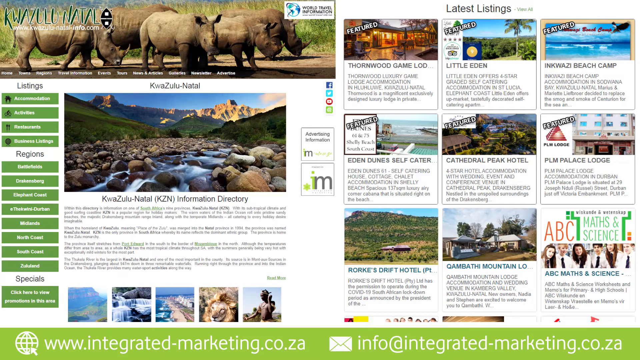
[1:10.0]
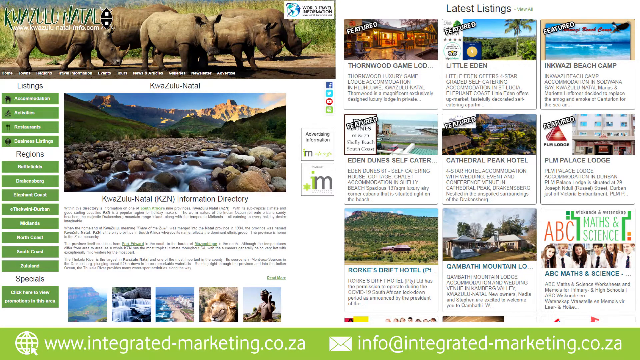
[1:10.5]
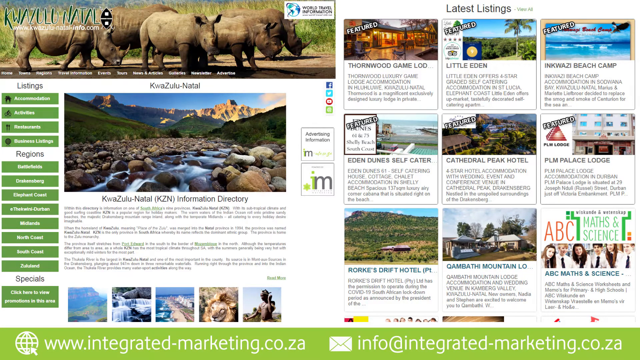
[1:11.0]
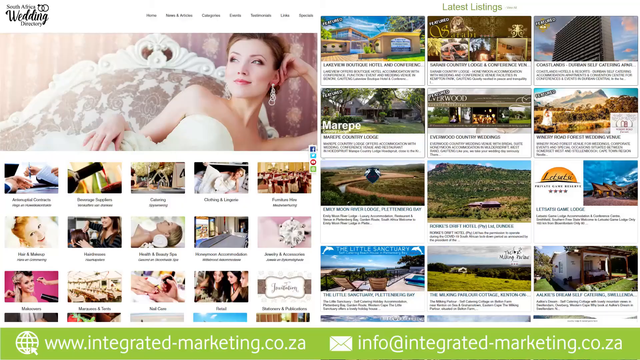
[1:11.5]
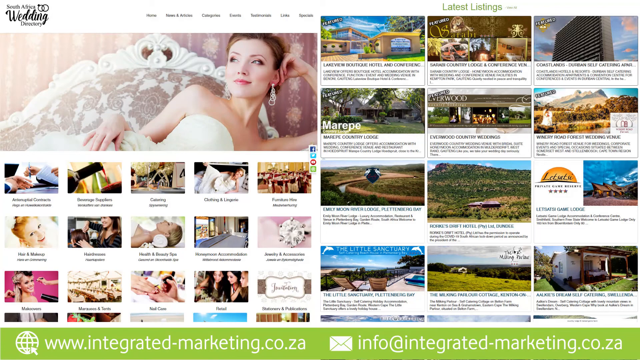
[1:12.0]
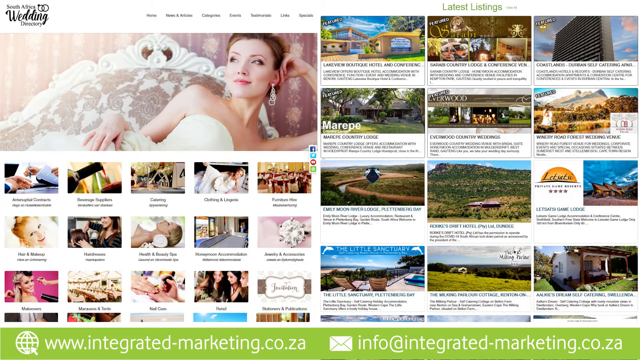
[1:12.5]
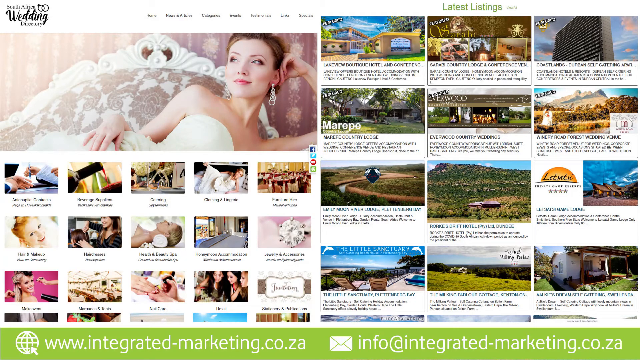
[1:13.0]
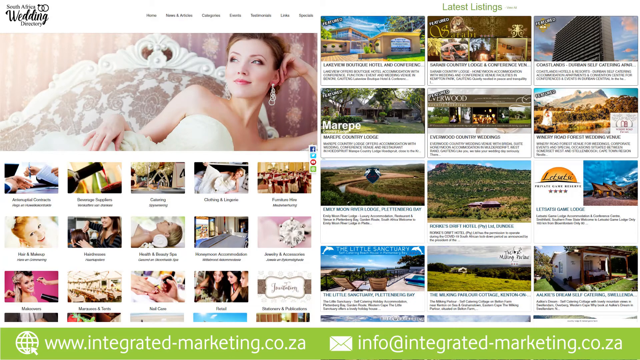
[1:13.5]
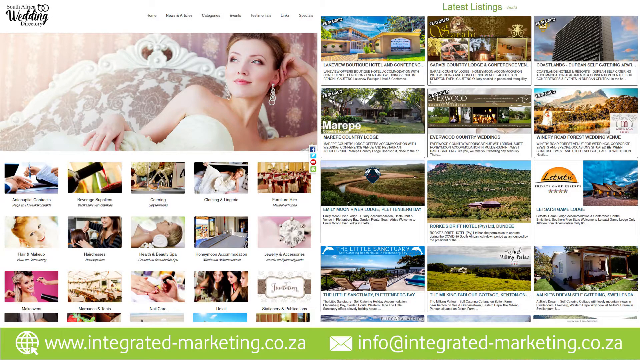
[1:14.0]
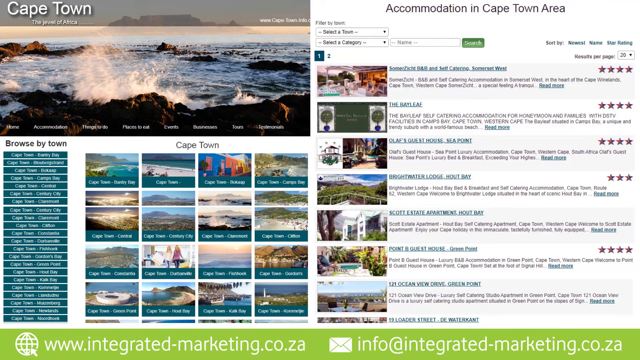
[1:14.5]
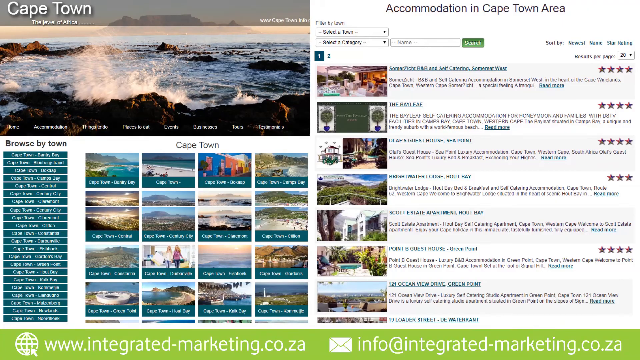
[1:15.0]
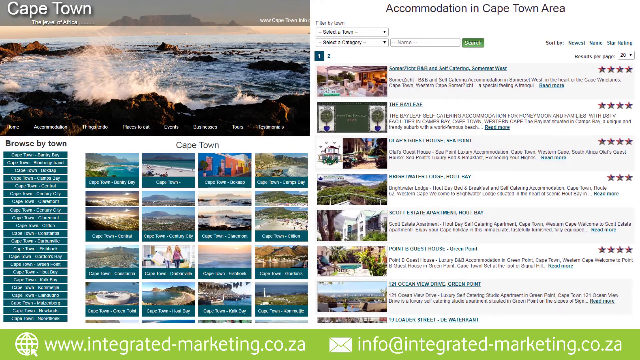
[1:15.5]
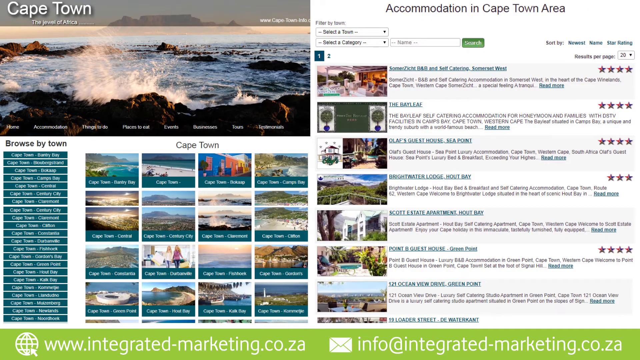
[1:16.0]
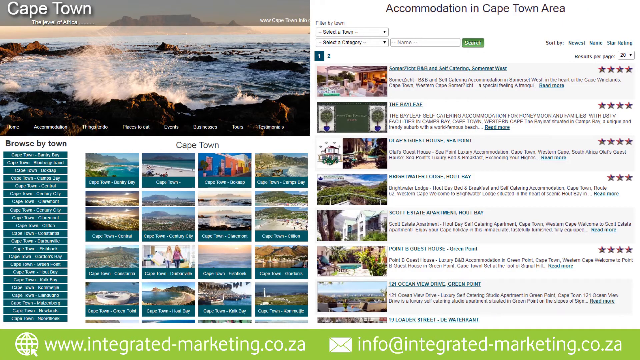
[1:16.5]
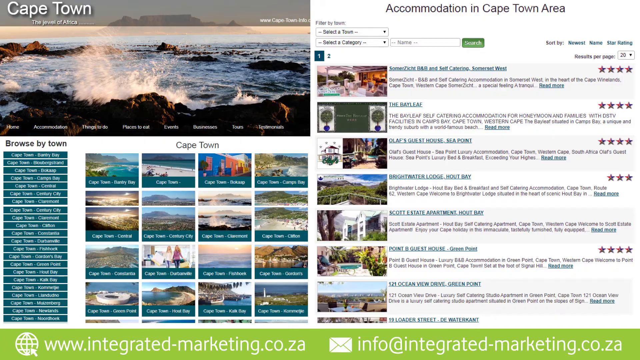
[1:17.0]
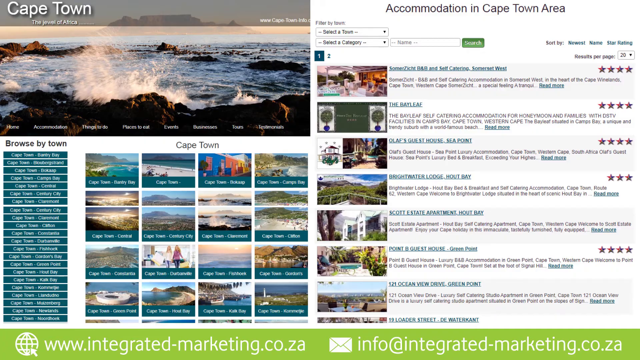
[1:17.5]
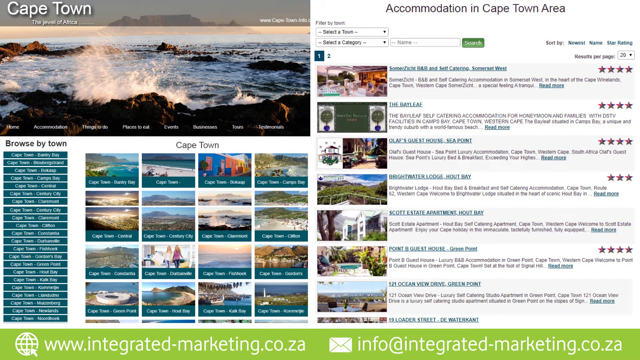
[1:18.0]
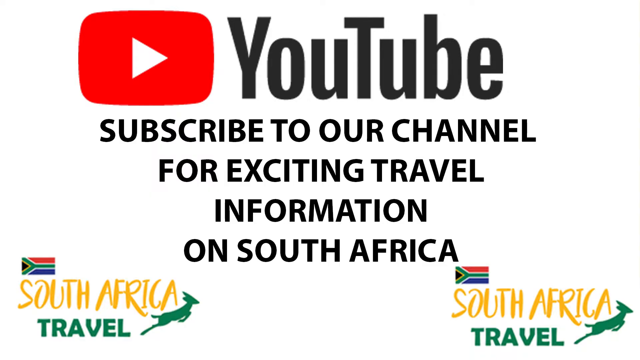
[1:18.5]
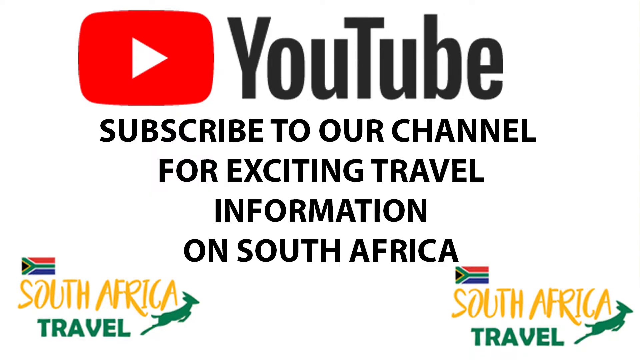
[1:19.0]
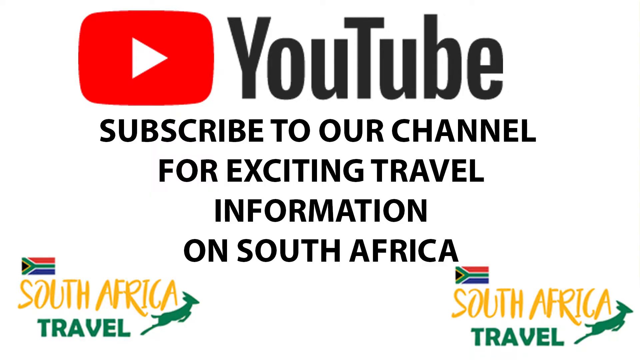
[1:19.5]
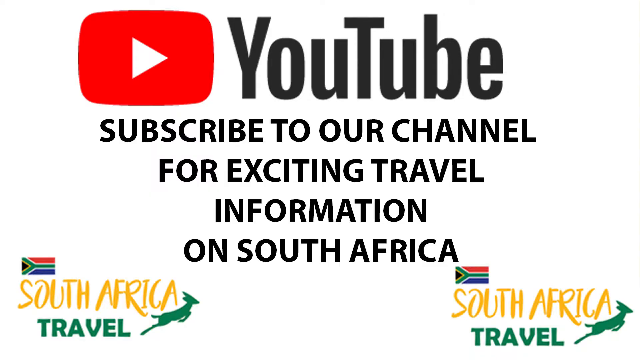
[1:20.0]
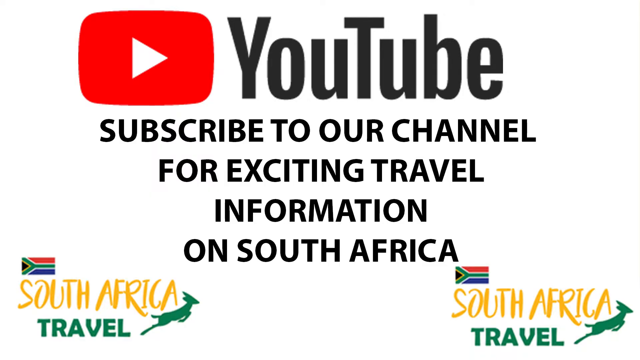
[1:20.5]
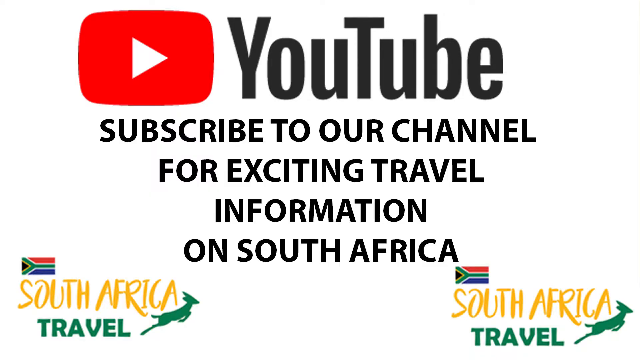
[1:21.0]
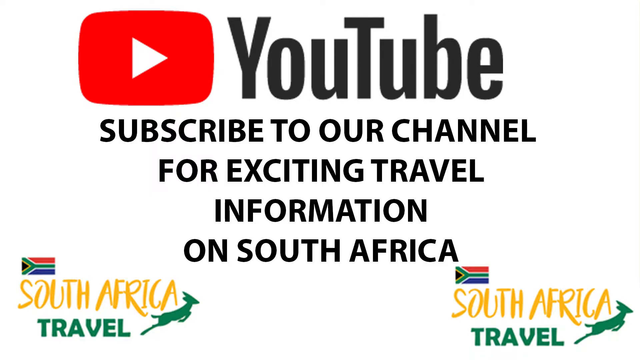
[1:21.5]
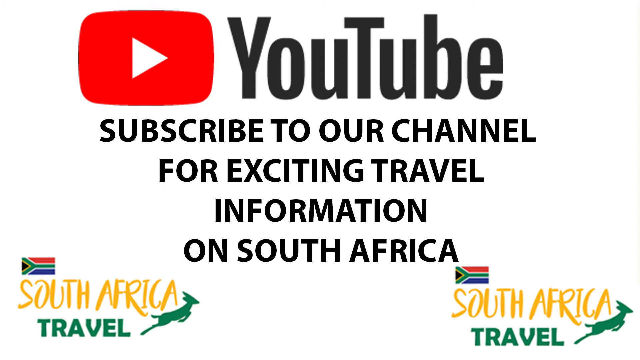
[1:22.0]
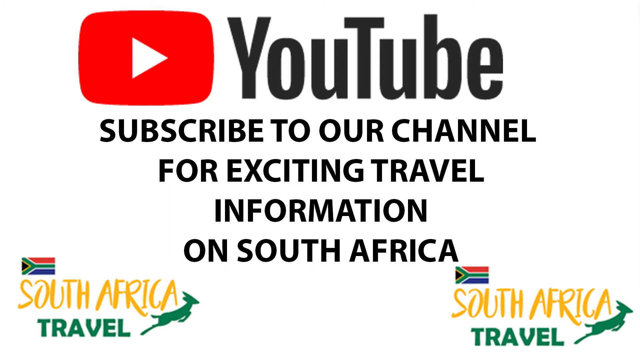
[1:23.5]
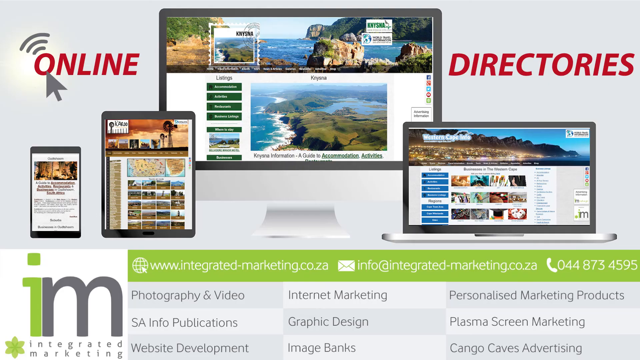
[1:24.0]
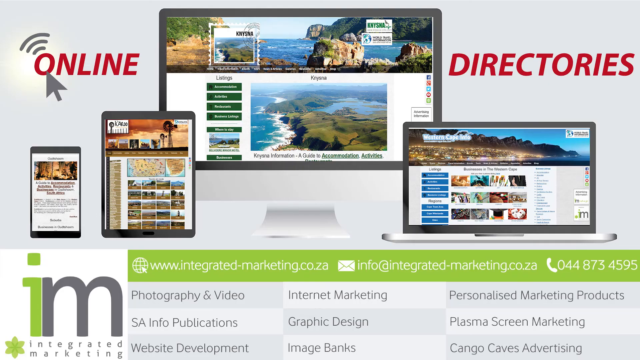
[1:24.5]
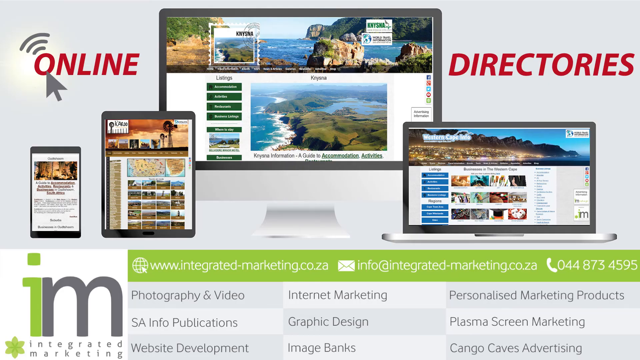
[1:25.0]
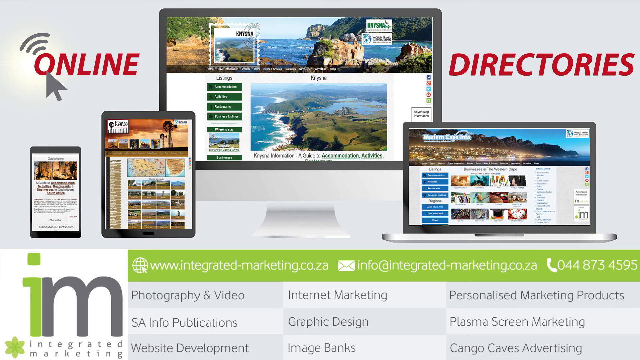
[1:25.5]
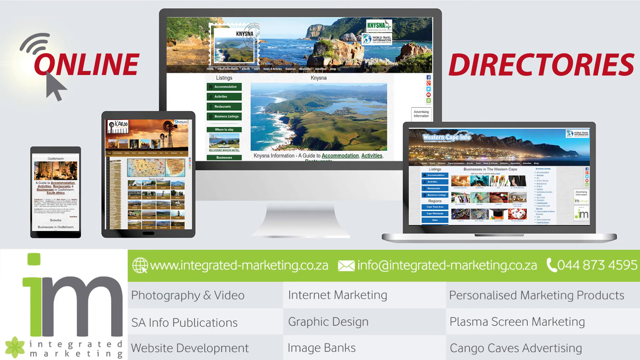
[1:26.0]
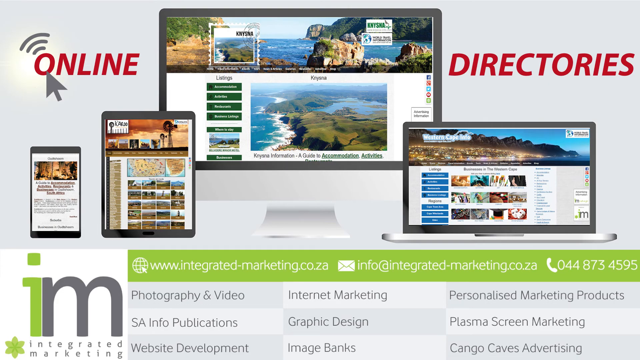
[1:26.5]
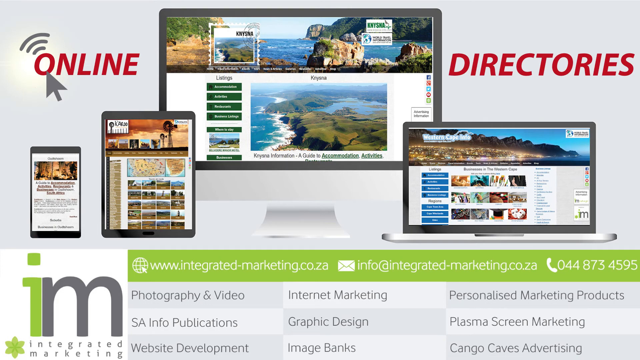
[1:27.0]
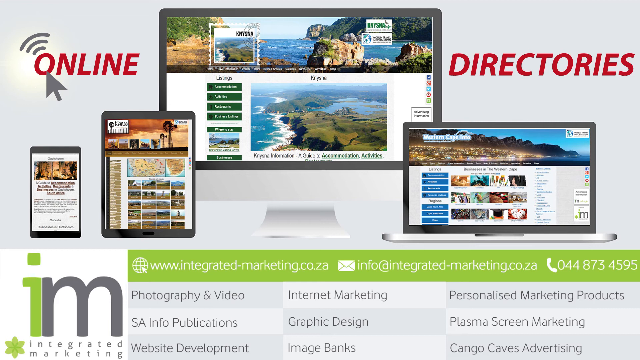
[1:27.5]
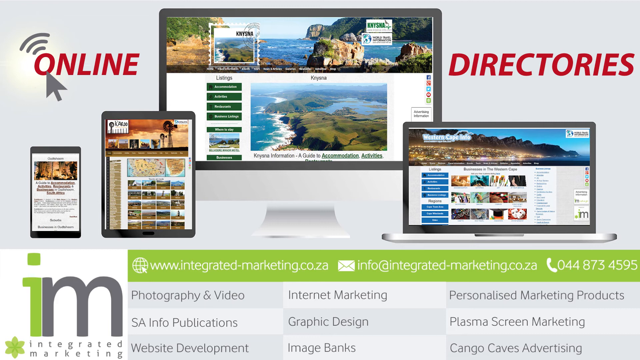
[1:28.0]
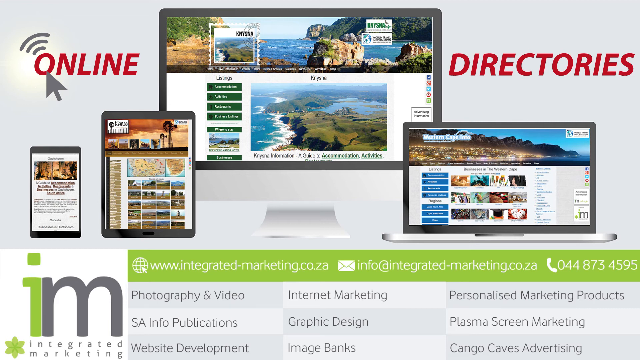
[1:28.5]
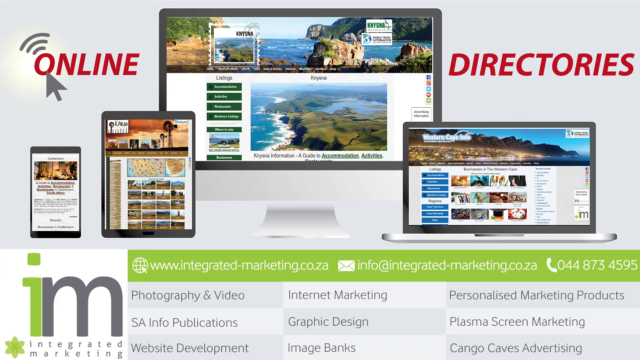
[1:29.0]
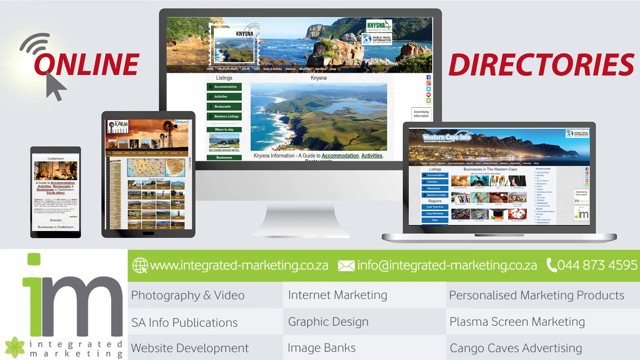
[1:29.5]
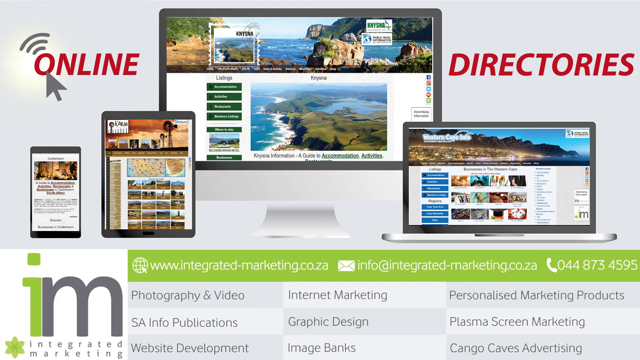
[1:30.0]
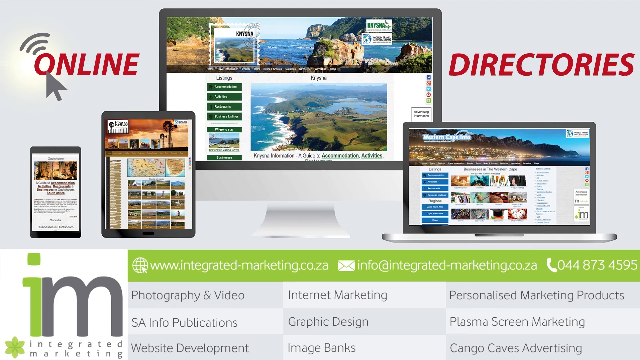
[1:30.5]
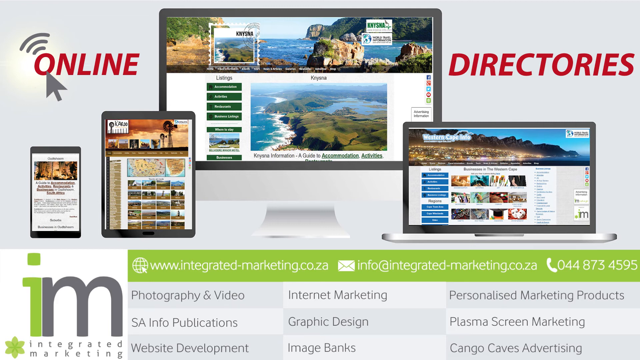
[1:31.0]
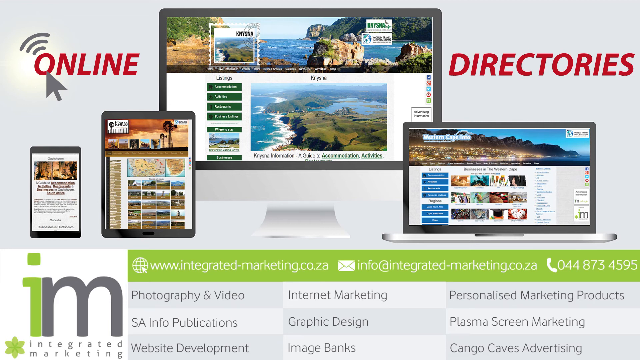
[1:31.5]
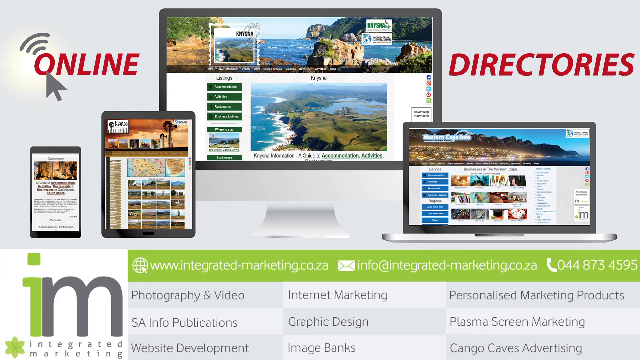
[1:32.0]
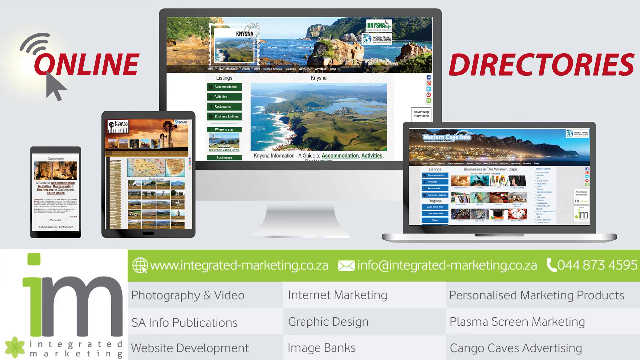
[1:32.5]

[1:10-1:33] The South Africa wedding directory is shown, with its website on the left and its latest listings with various photos on the right. Next is Cape Town, subtitled "the jewel of Africa": the main website is on the left, and the right shows a page listing accommodation in the Cape Town area, with photos of the accommodations, their star ratings, descriptions, and options to sort and filter the search. A concluding graphic shows the YouTube logo and "YouTube" at the top, with "subscribe to our channel for exciting travel information on South Africa" below; in the bottom left and bottom right is the same "South Africa travel" logo from the beginning of the video. The final graphic concerns online directories and integrated marketing, listing offerings such as photography and video, internet marketing, graphic design, essay info publications, personalized marketing products, and plasma screen marketing; this is the ending card.